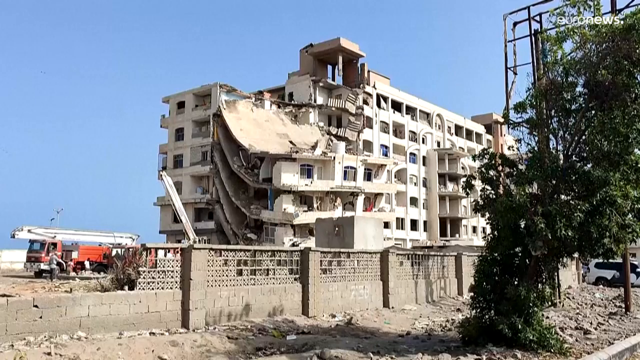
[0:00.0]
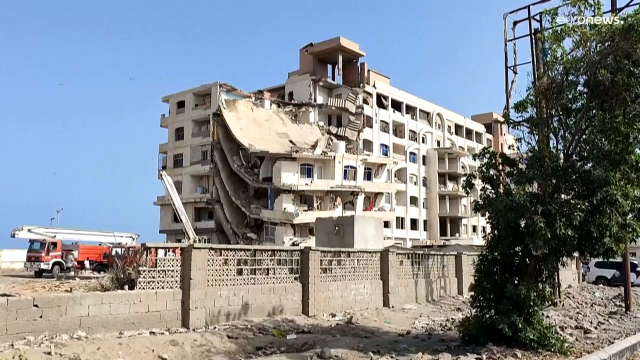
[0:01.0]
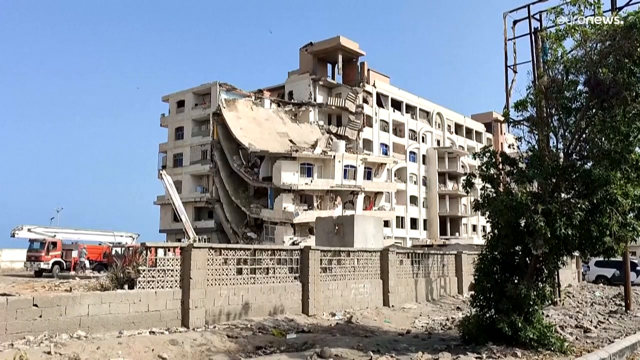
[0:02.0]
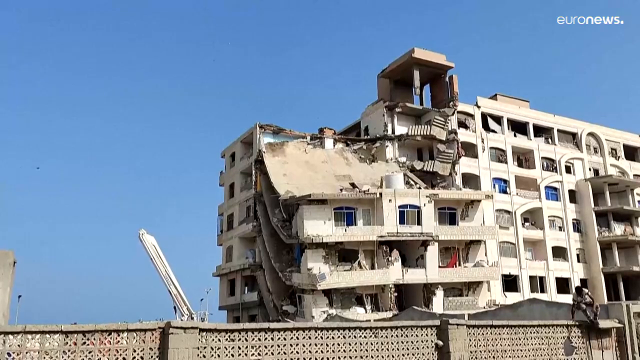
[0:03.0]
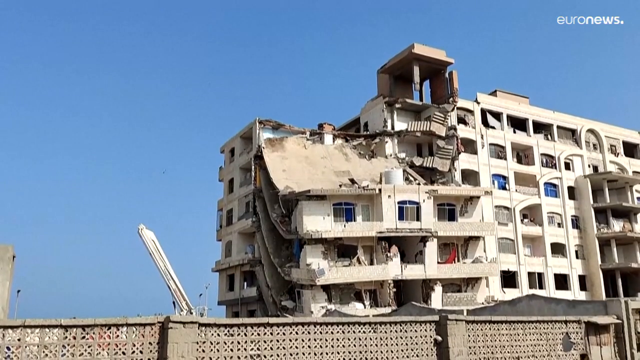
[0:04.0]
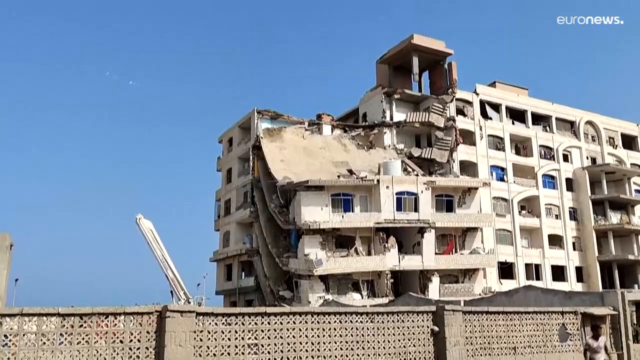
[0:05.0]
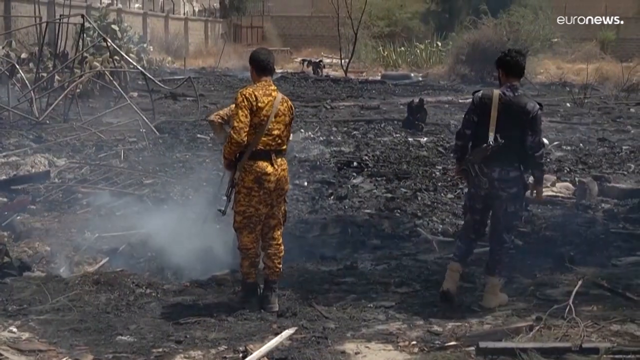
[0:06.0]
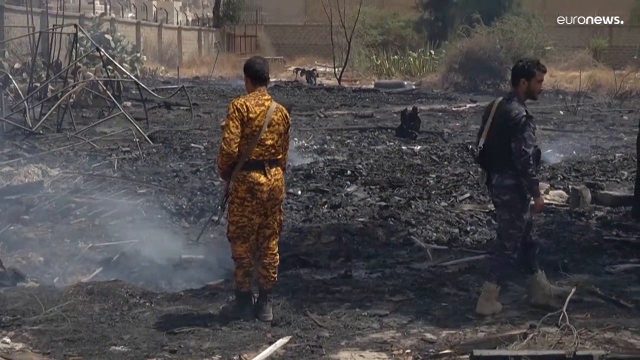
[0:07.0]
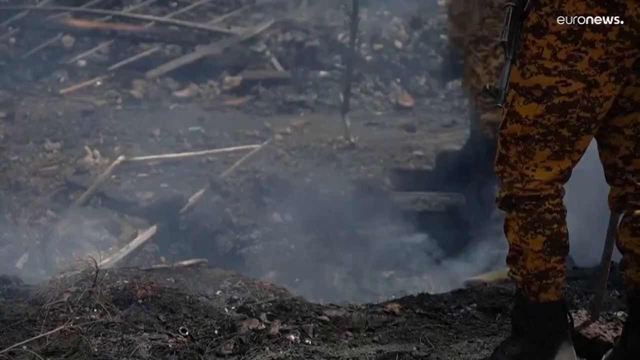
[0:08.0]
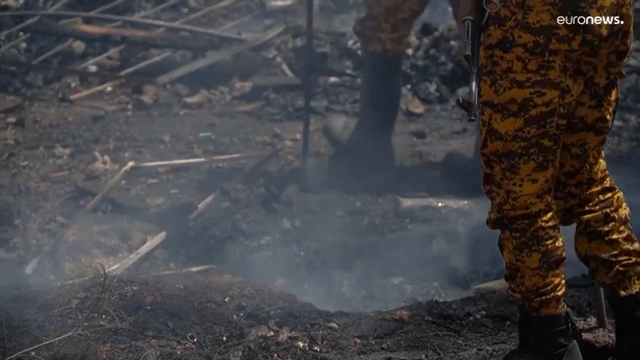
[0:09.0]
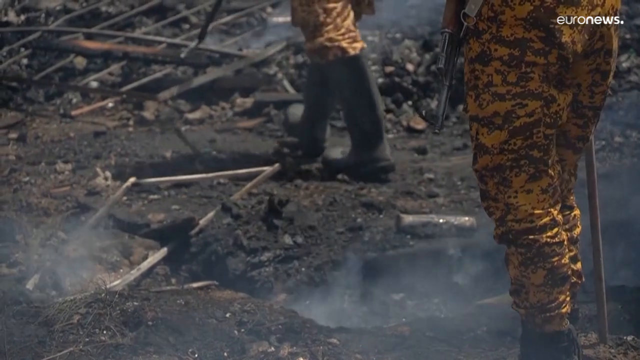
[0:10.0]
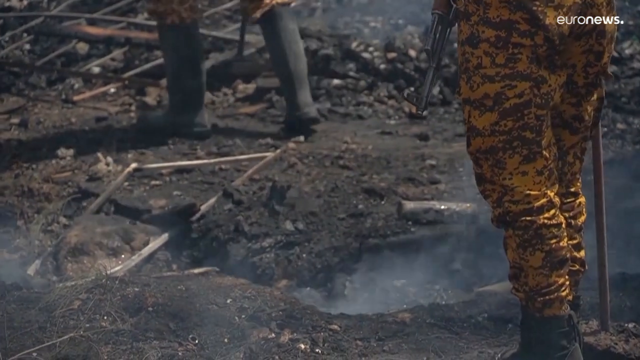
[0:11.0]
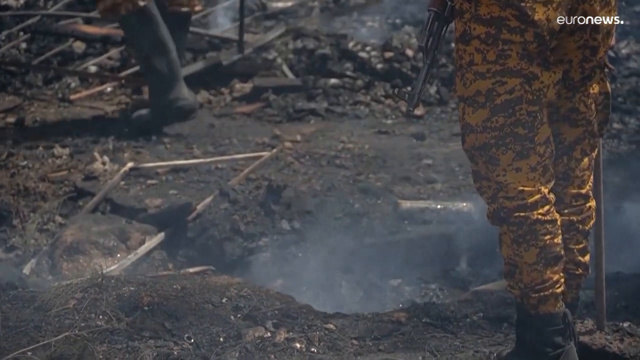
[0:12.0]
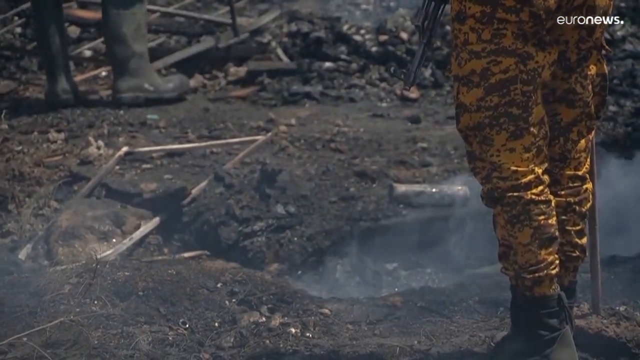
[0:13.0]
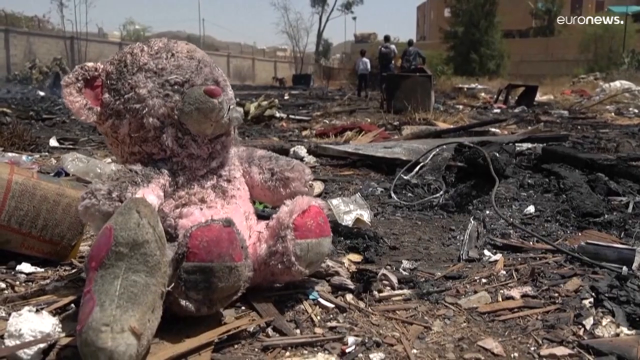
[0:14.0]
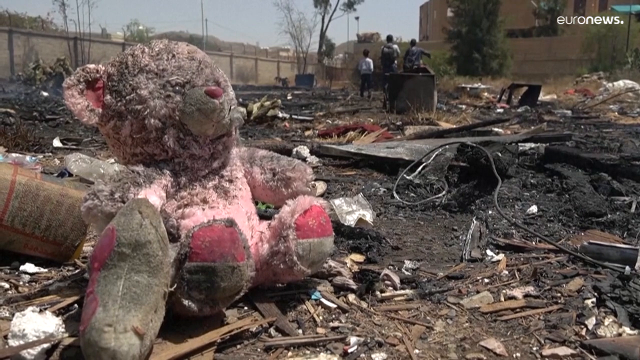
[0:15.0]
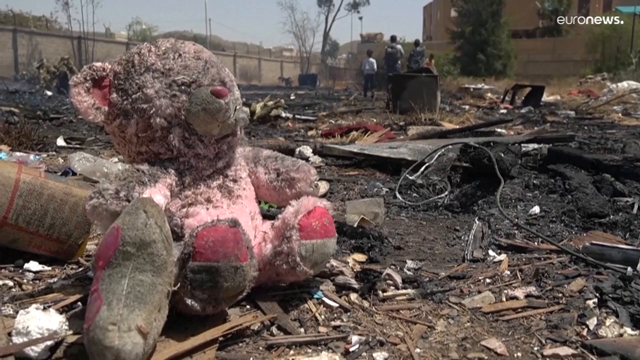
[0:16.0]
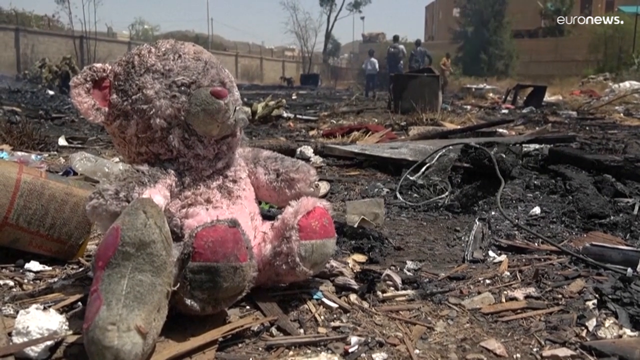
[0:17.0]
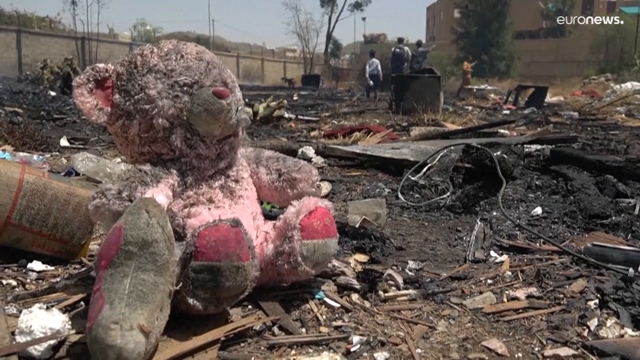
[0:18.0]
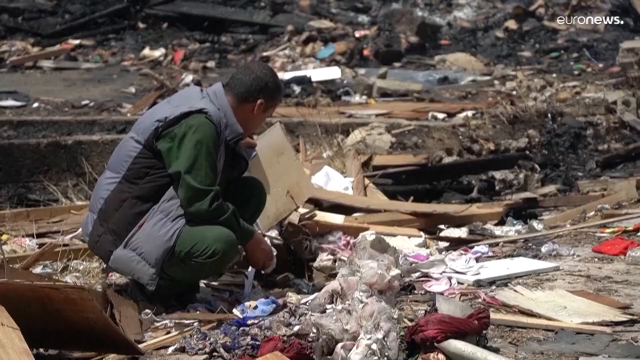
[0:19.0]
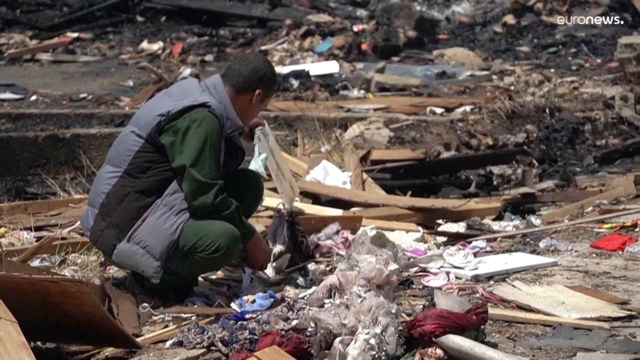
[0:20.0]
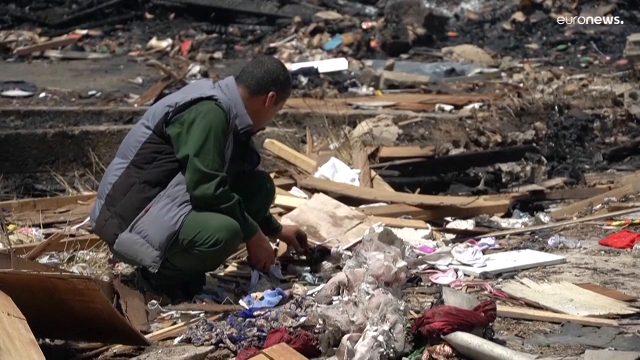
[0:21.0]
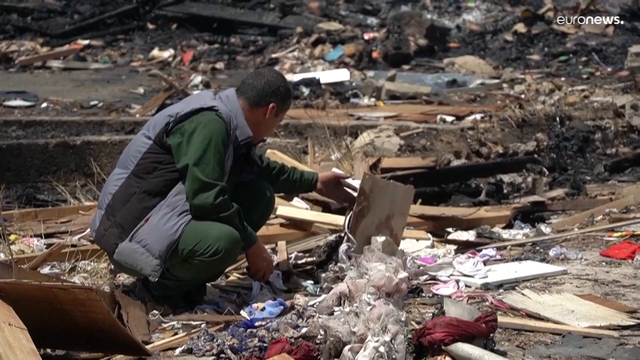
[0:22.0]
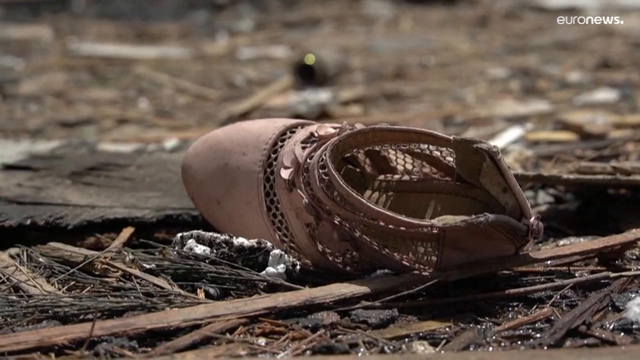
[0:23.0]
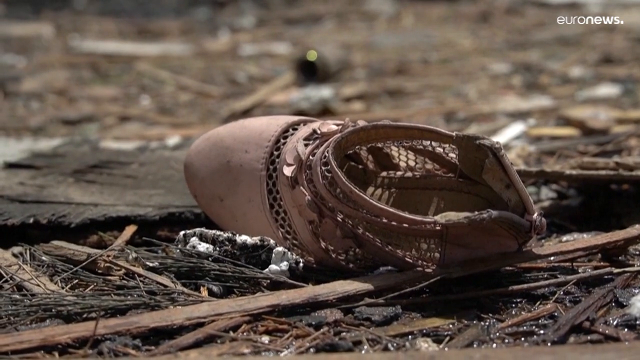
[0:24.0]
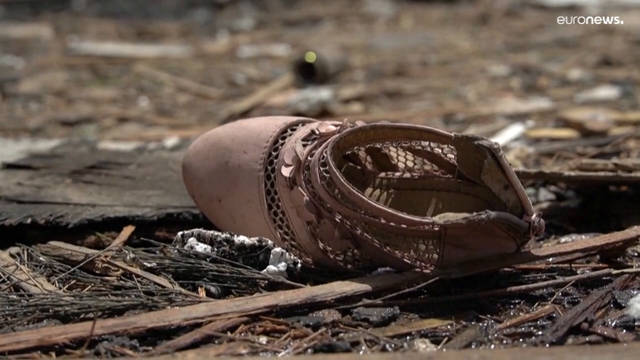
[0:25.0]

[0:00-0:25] Neuron News presents a story of destruction; the piece is from Neuron News, which is funded by the European Union. A man in a camouflage suit looks at bomb drop sites that still have fire in them, followed by a close-up of a teddy bear. A man in a gray jacket searches through rubble. The shot cuts out to a tall building that has been devastated, probably by a bomb drop. Rubble from what seems to be the tail end of a building, where a bomb apparently dropped, is also shown. The location is hard to tell, though it is possibly Ukraine.